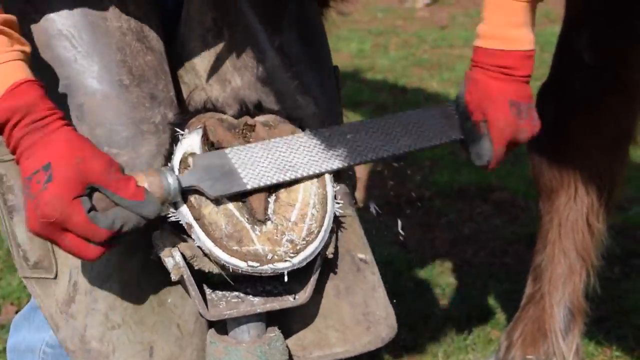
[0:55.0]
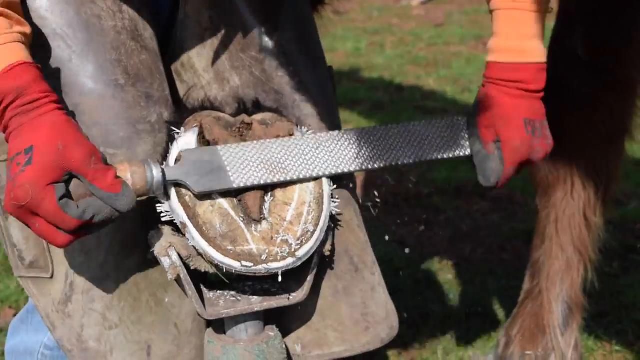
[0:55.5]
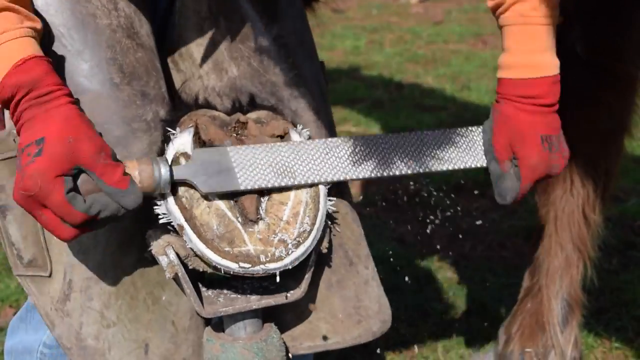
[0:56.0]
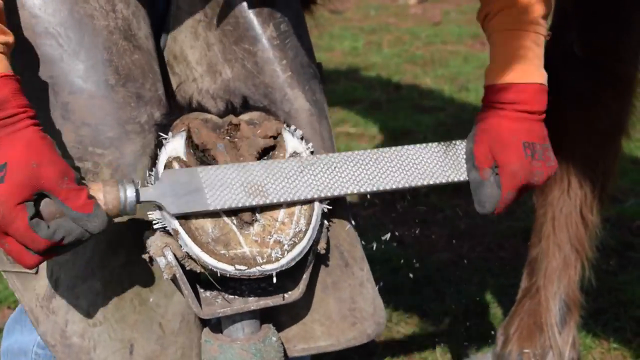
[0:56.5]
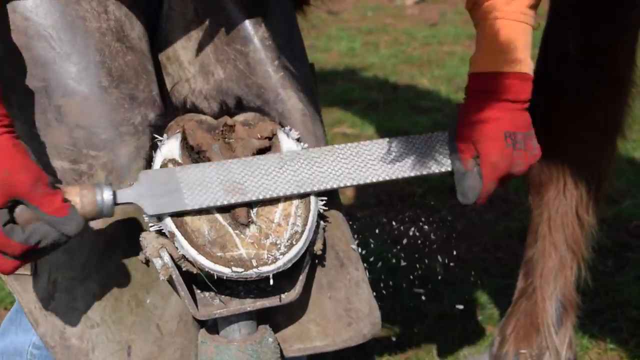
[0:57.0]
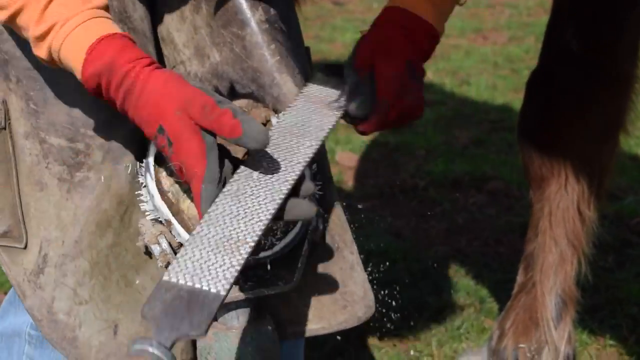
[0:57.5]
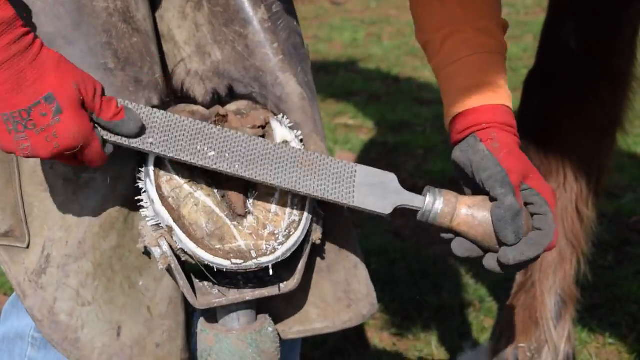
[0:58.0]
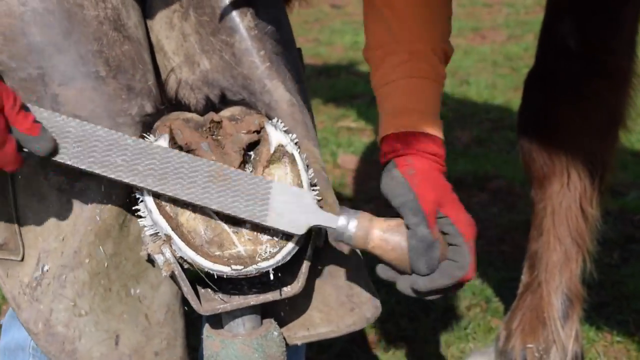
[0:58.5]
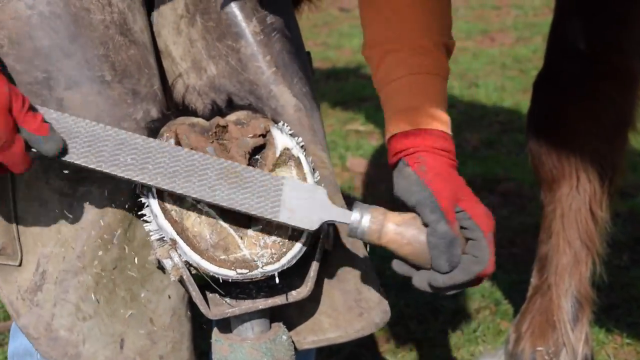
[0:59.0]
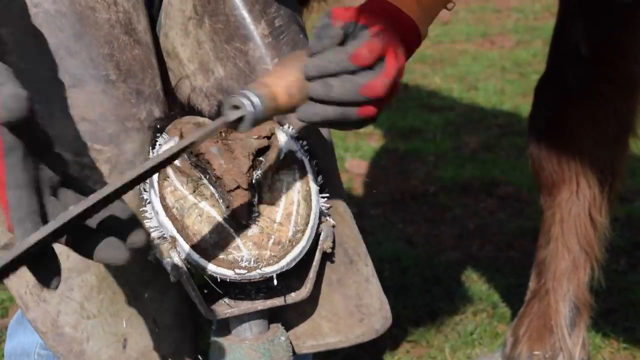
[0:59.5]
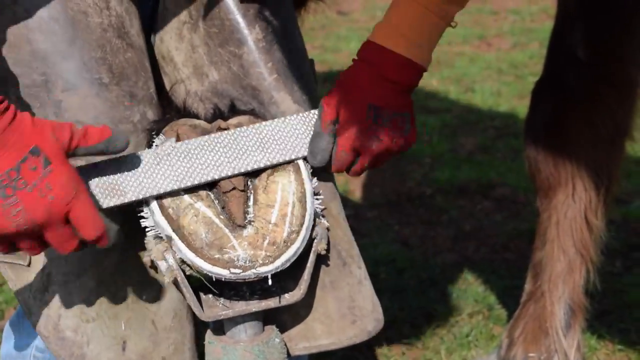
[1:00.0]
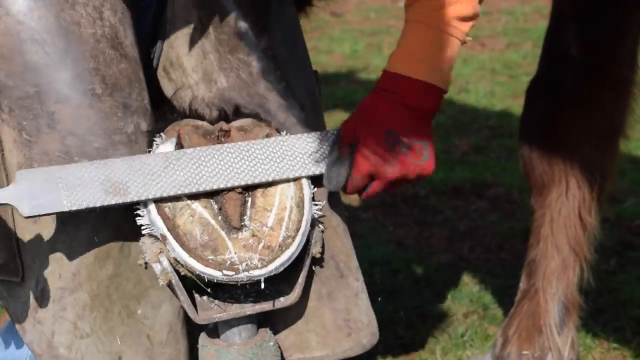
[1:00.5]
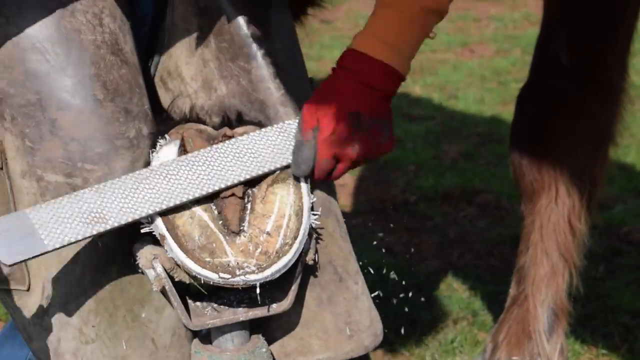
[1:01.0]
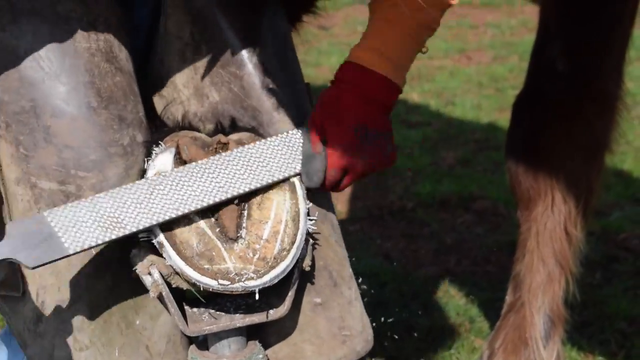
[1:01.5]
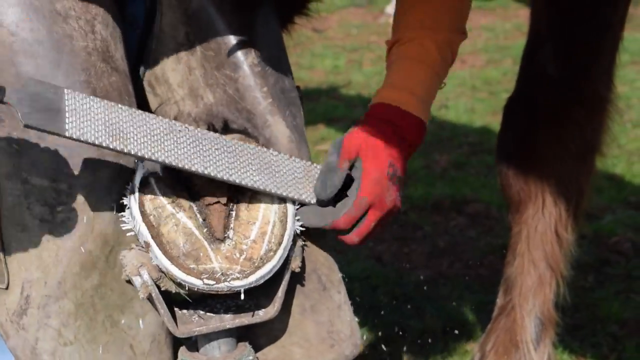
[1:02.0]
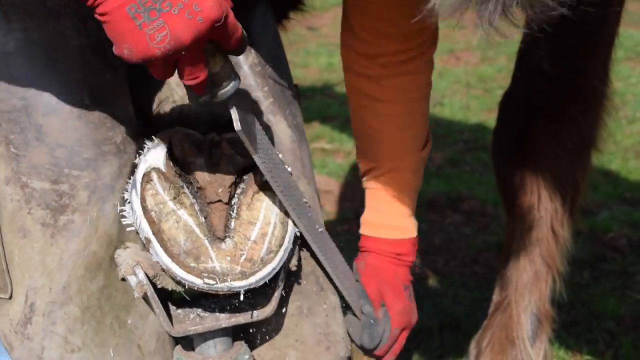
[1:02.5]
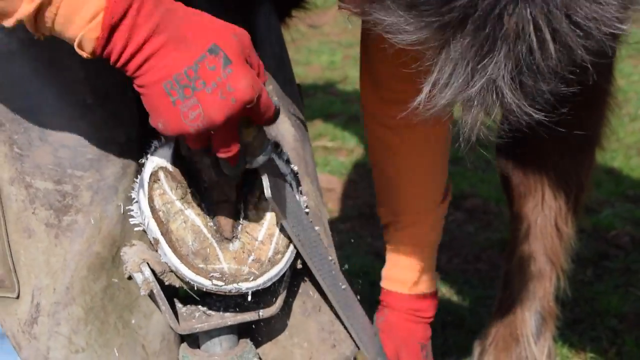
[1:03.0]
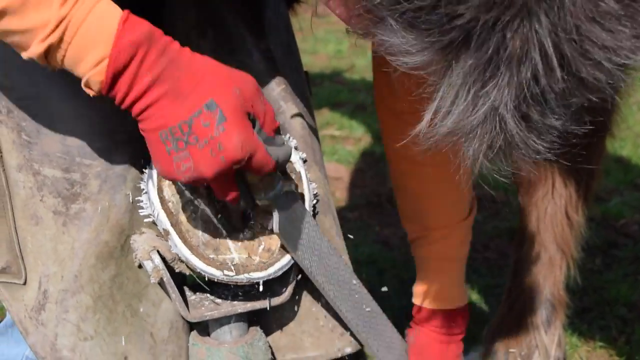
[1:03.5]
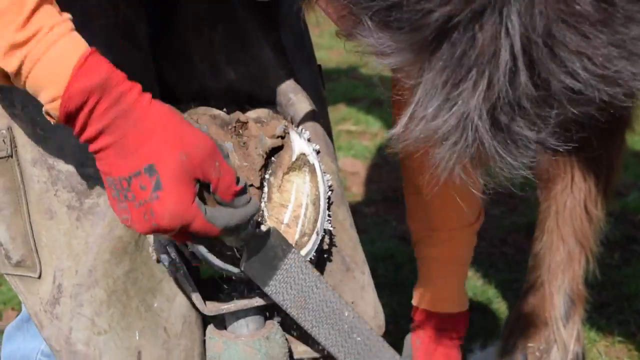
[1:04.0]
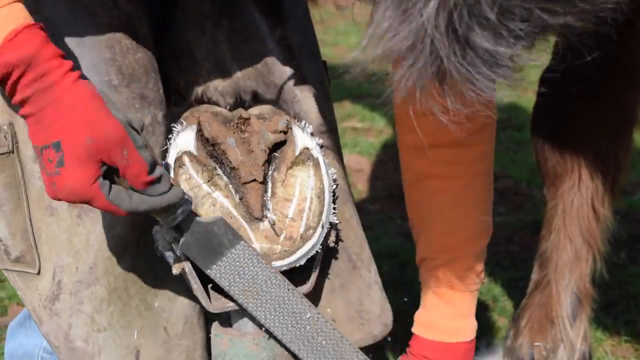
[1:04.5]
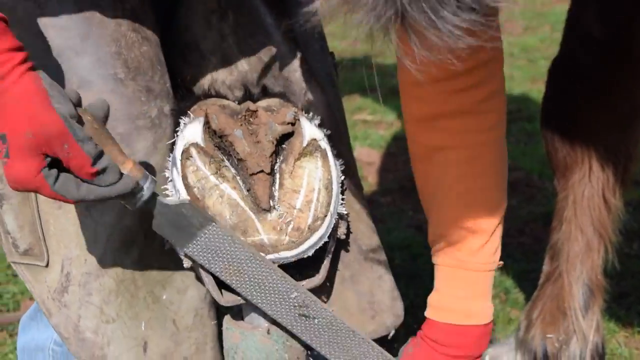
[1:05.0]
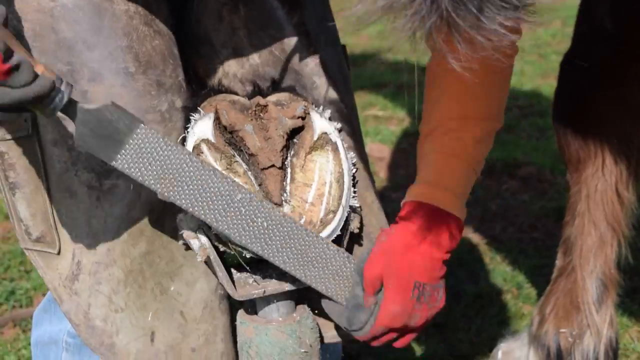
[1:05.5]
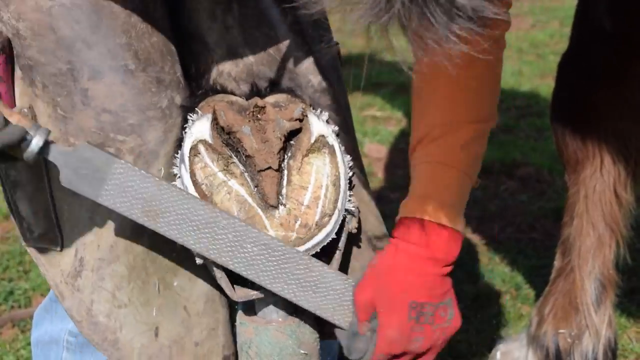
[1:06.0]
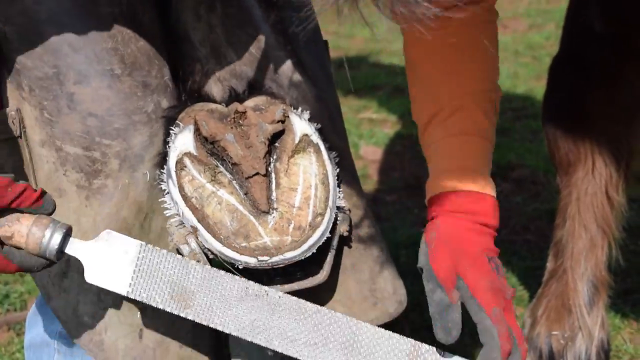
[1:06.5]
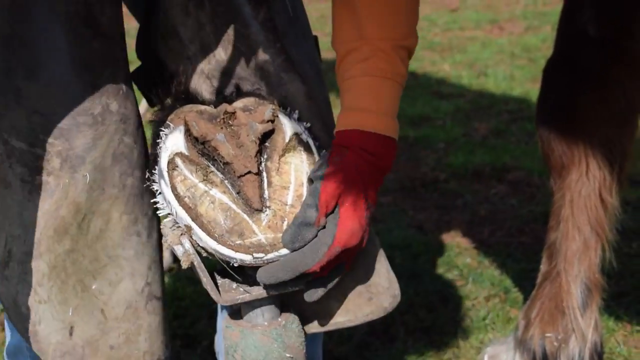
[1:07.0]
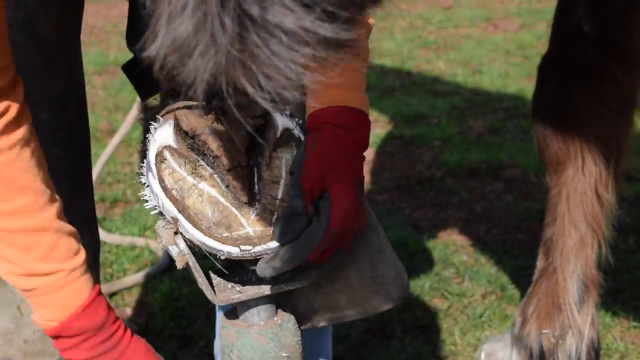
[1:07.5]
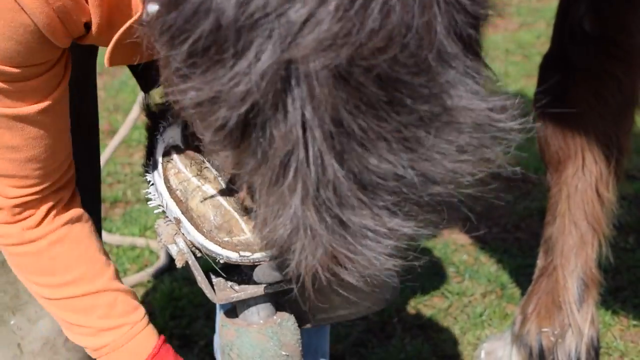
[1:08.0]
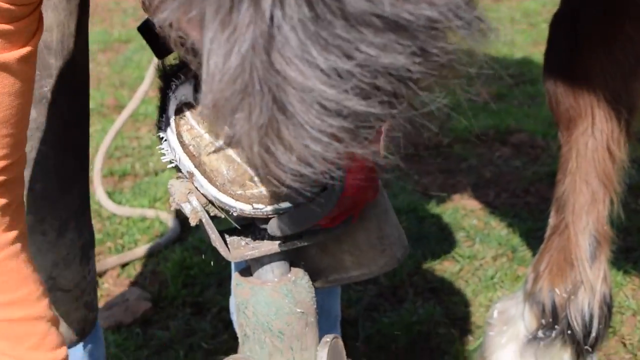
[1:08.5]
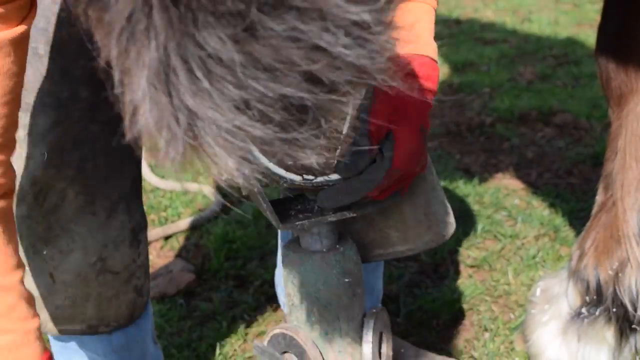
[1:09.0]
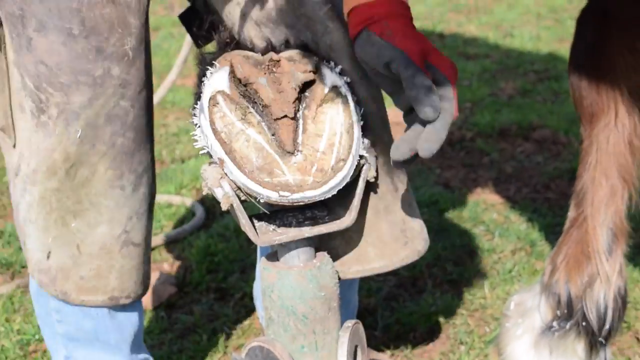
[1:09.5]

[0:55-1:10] Still using the same filing tool, she files the horse's hoof, apparently making sure the whole outer edge is exposed and white. She puts the file down, grabs onto the hoof a little, seemingly sitting it up a tad, and reaches down, possibly for her next tool. She grabs the hoof with her left hand, from the top under. The horse's shadow is still visible in the background, and he stands still while being groomed. It looks like a very sunny day outside, casting many shadows. The smock looks rubber and worn, as if it has been used often.